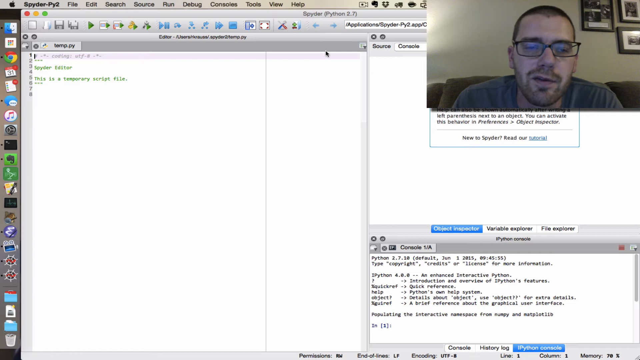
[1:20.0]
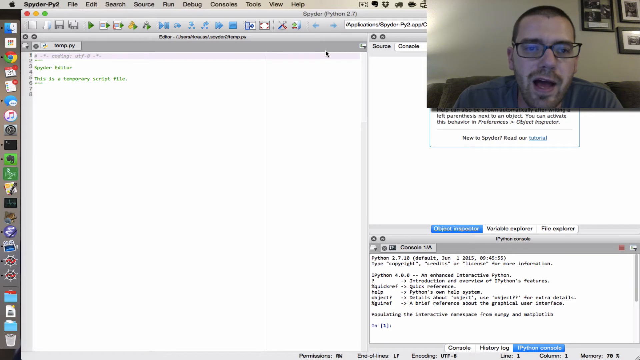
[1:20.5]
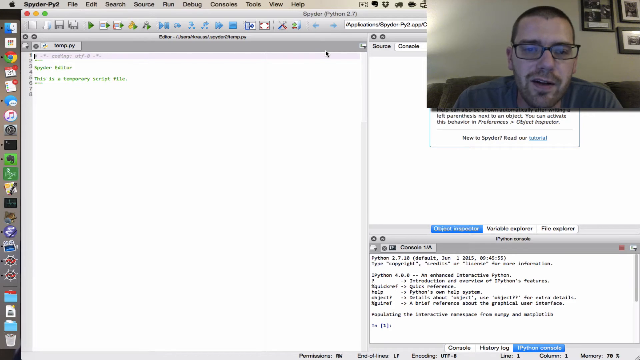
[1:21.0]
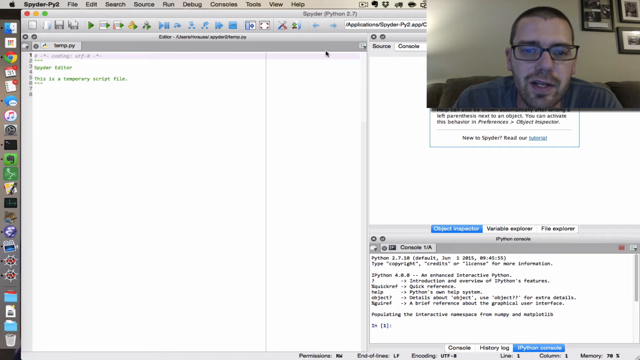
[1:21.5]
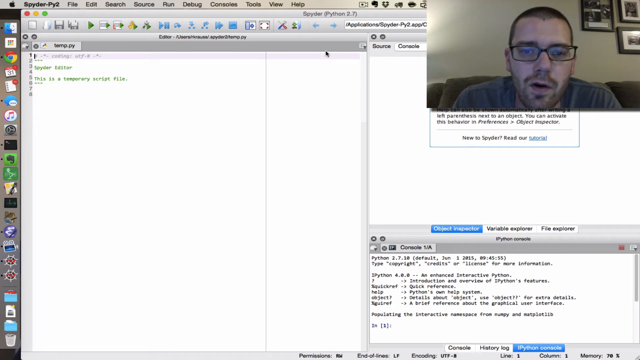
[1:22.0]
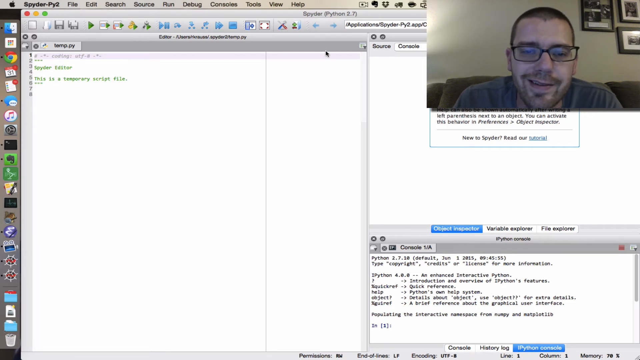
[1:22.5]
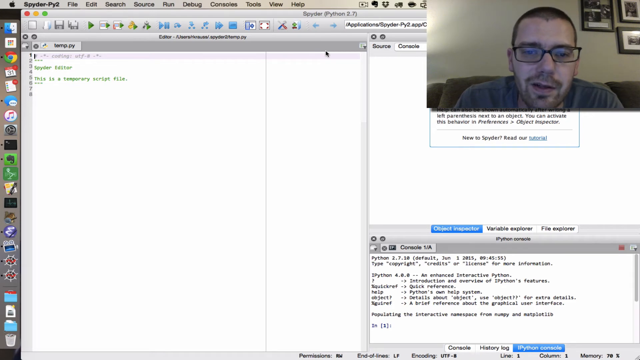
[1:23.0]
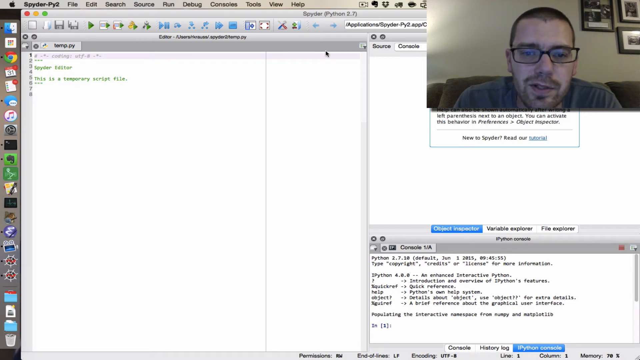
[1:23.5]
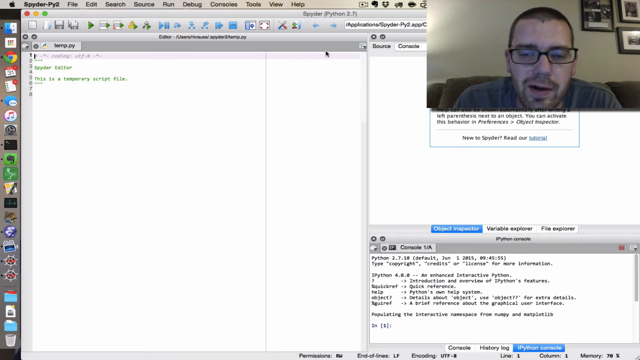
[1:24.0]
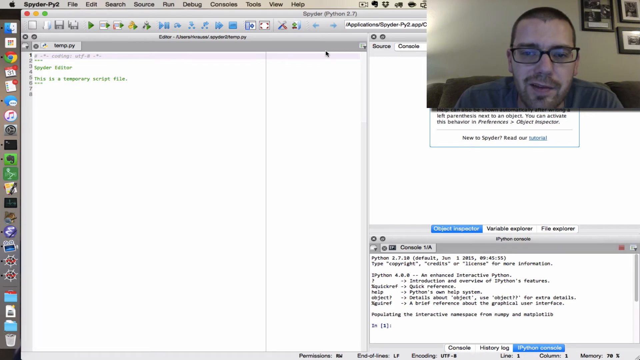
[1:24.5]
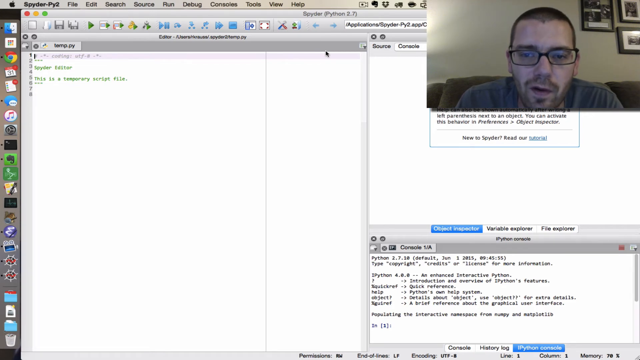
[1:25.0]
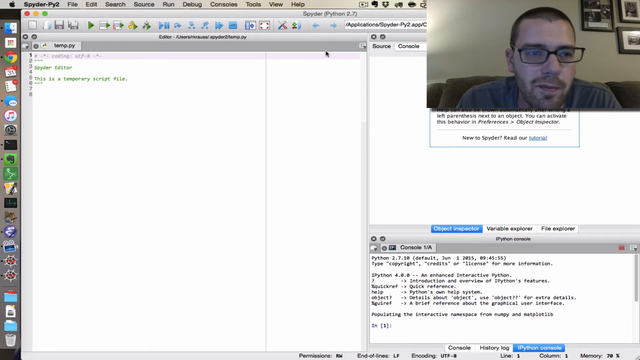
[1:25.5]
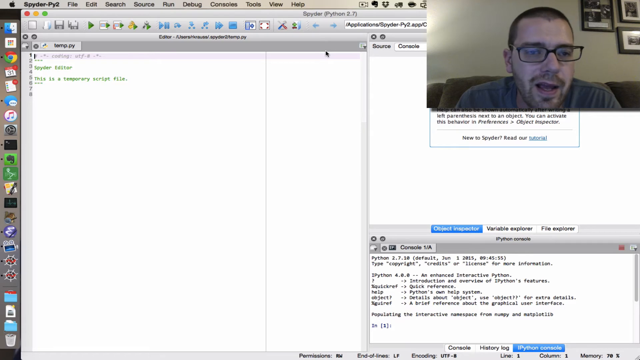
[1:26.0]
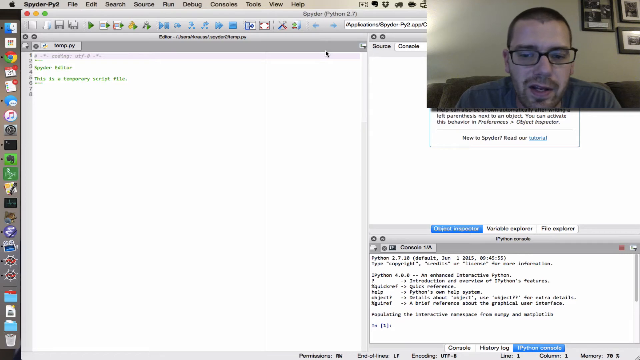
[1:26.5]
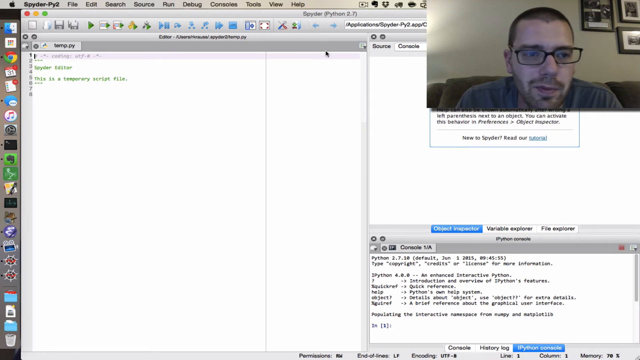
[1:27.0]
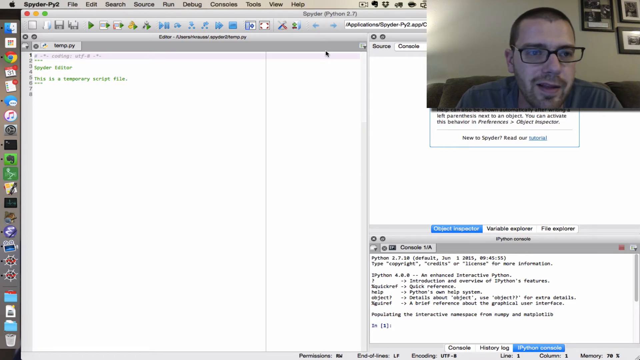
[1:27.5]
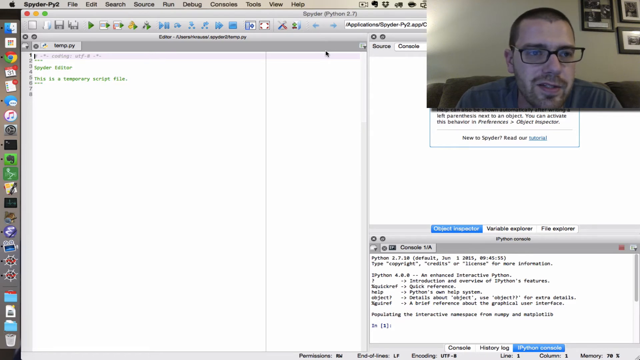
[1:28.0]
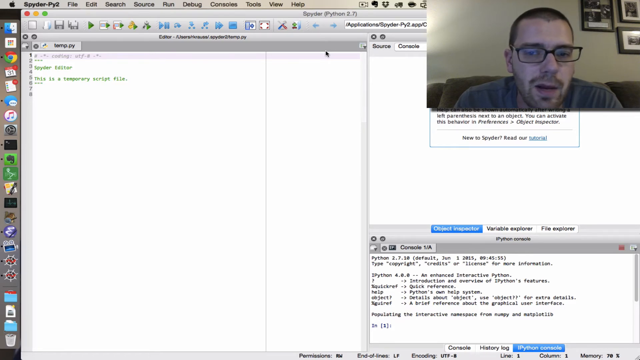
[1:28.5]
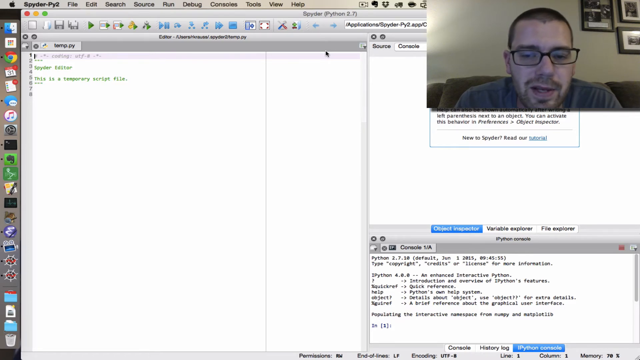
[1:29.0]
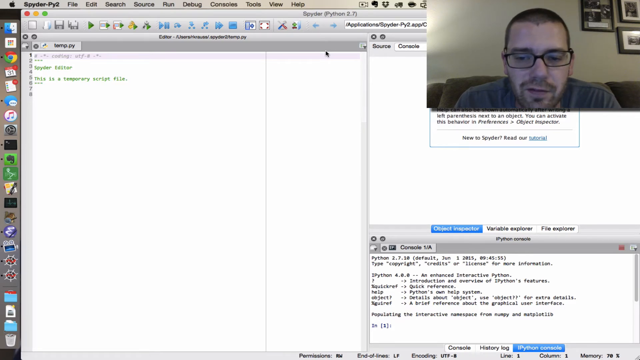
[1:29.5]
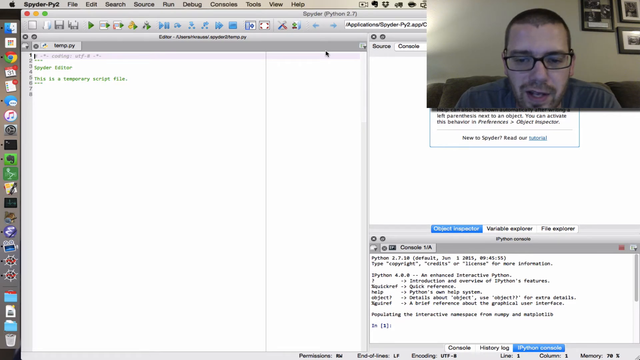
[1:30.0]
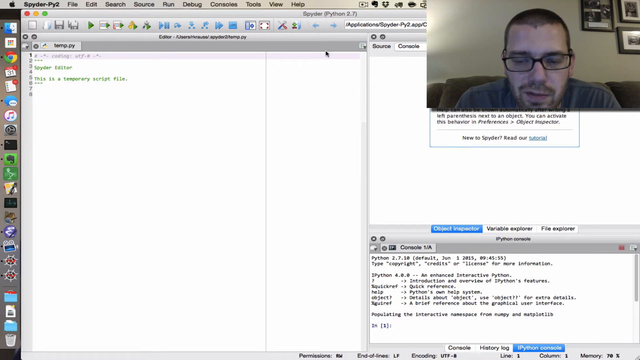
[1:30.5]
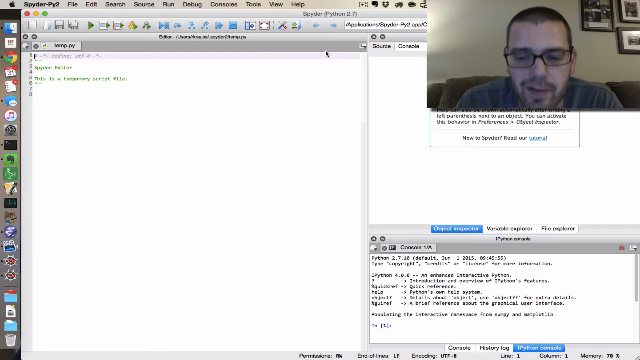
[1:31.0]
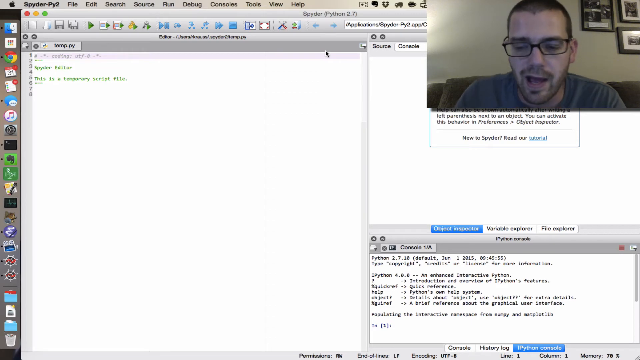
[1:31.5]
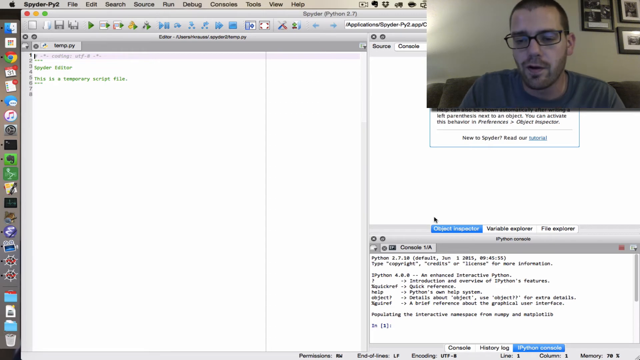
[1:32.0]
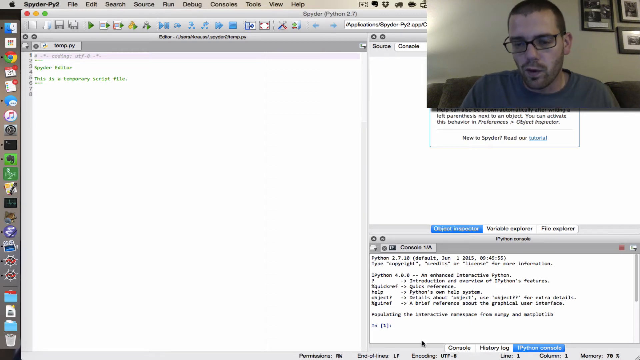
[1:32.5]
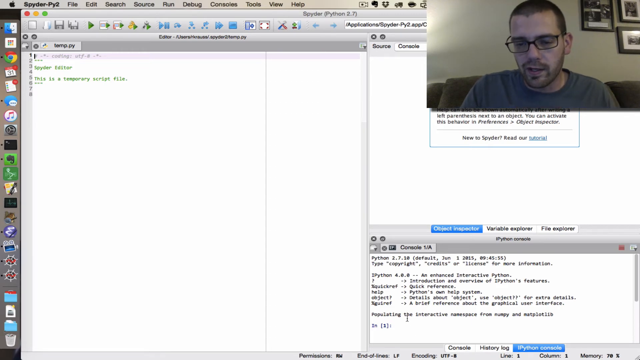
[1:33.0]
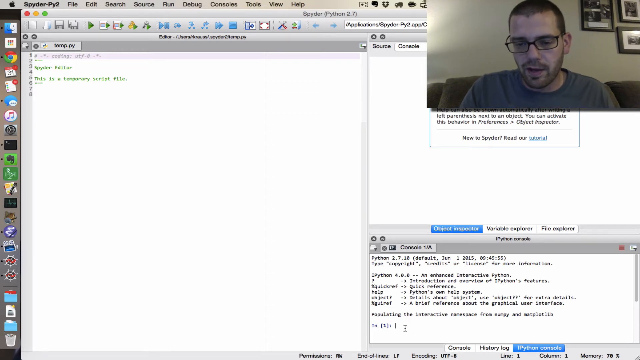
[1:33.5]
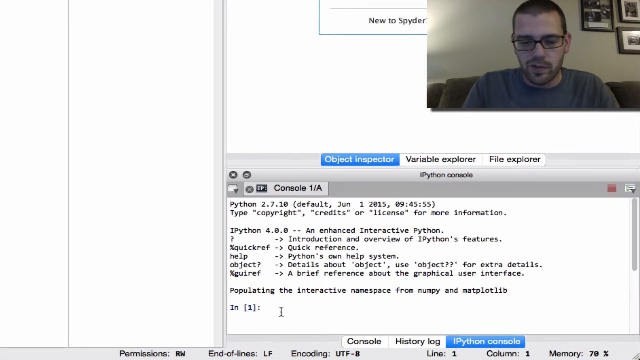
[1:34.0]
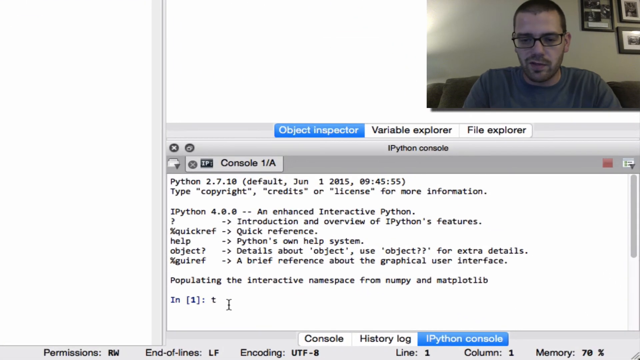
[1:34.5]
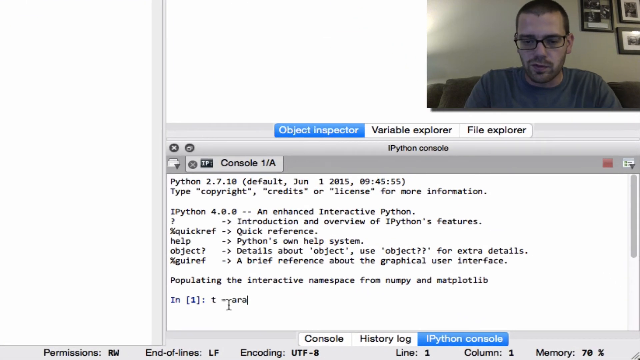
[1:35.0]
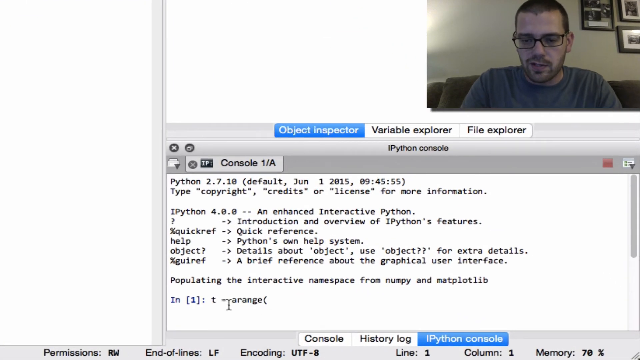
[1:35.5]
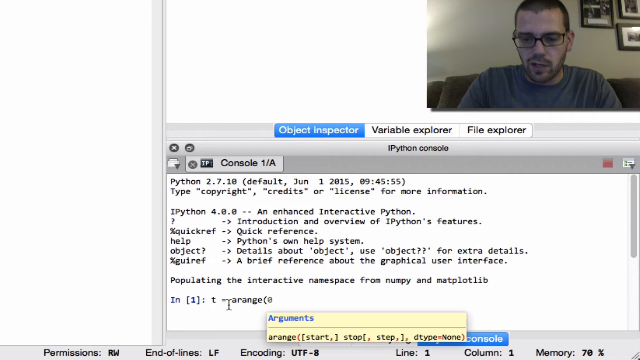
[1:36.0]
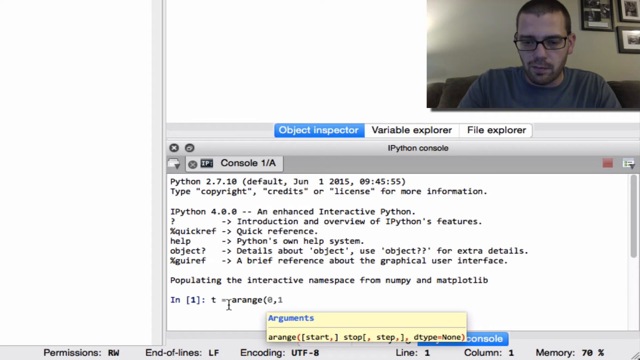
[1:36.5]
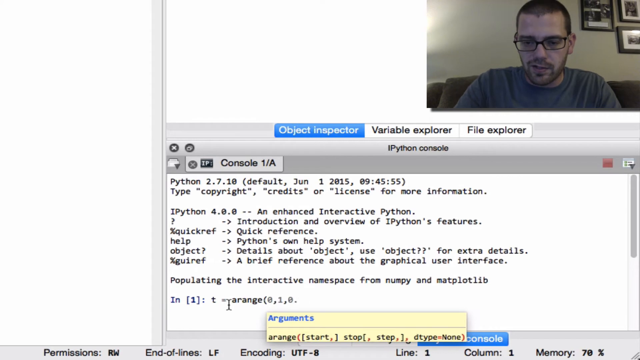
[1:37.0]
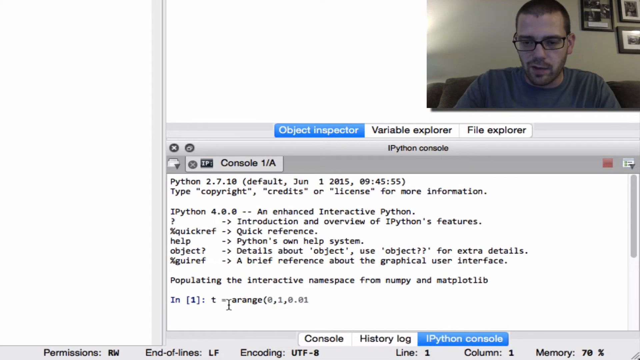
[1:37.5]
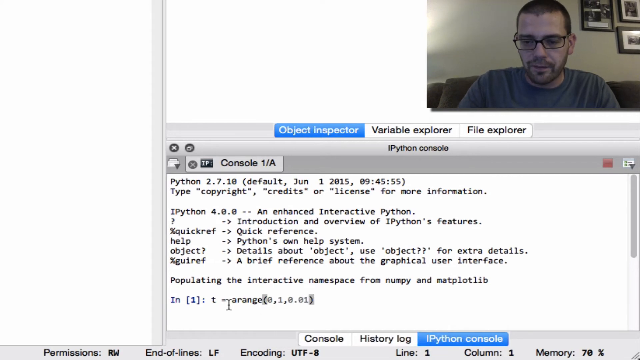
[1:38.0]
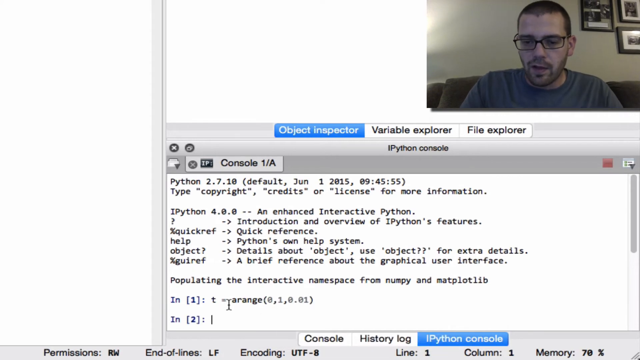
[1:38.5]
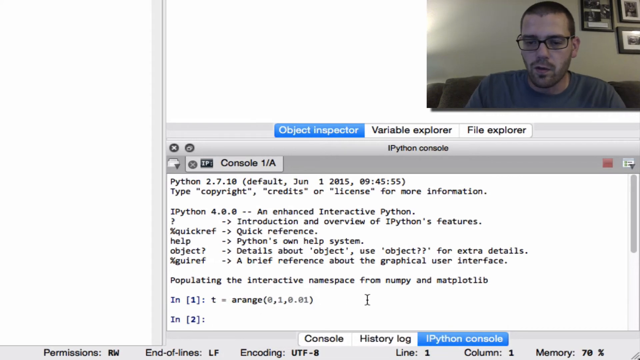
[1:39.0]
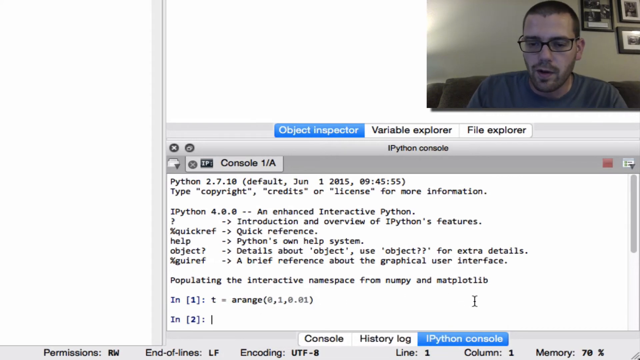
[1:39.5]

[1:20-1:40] He continues talking in the video at the top. At the very top of the Spyder window is the little Apple logo to the left, followed by menus including File, Edit, Search, Source, Run and a few others, with some icons of unclear purpose to the right. Underneath are a red, a yellow and a green dot, and icons with green arrows and blue arrows. There is a cursor underneath the open web page, and an object inspector. He zooms in and types an entry 1 in brackets and an entry 2 in brackets; the first bracketed entry includes a series of numbers in parentheses.